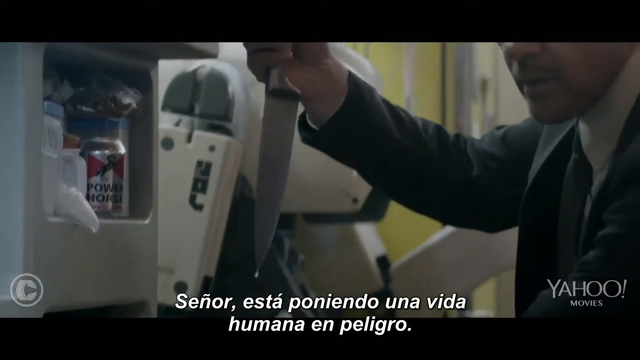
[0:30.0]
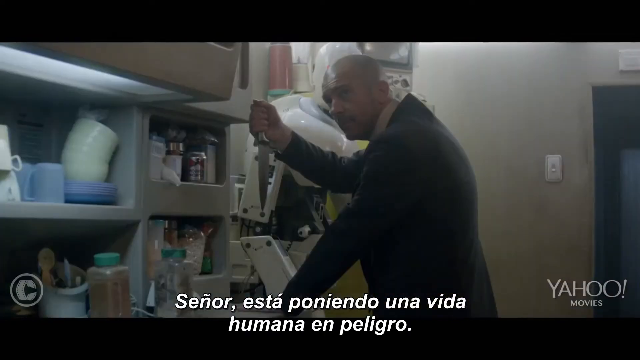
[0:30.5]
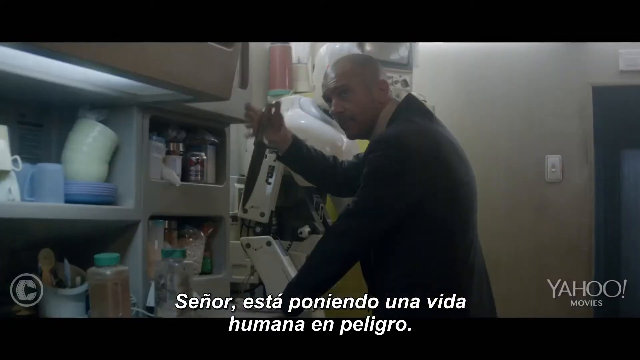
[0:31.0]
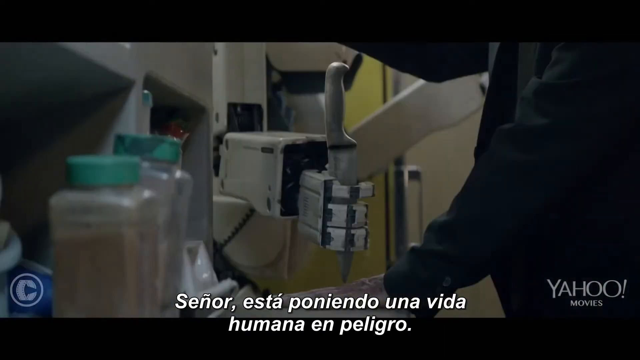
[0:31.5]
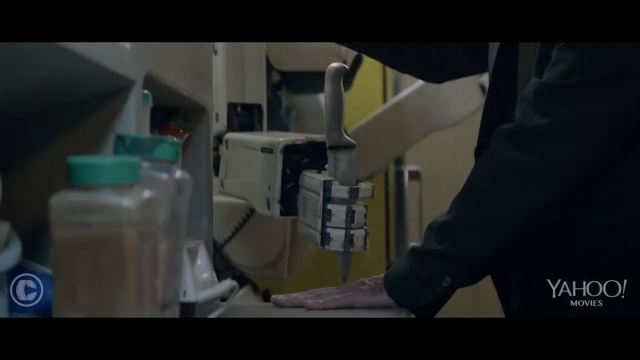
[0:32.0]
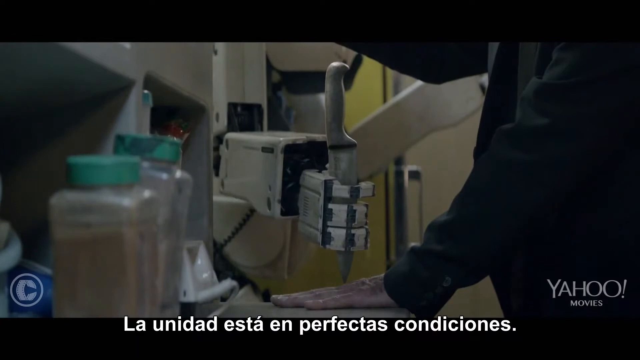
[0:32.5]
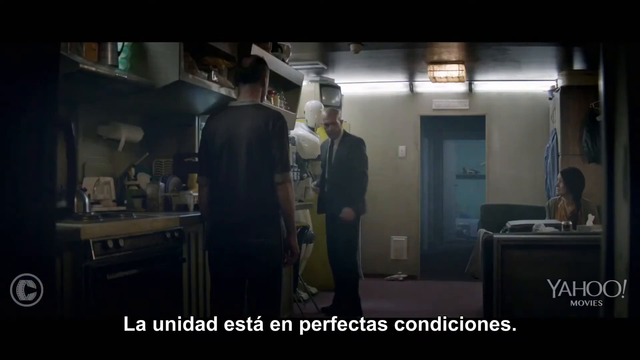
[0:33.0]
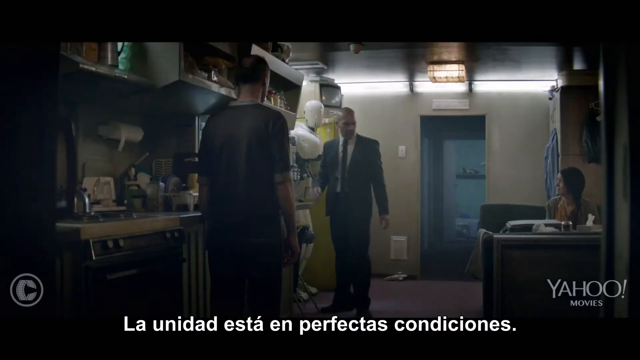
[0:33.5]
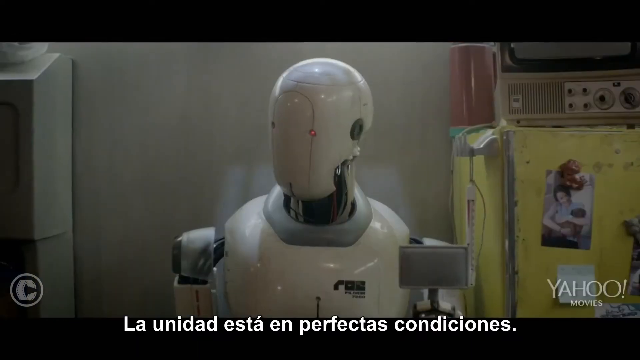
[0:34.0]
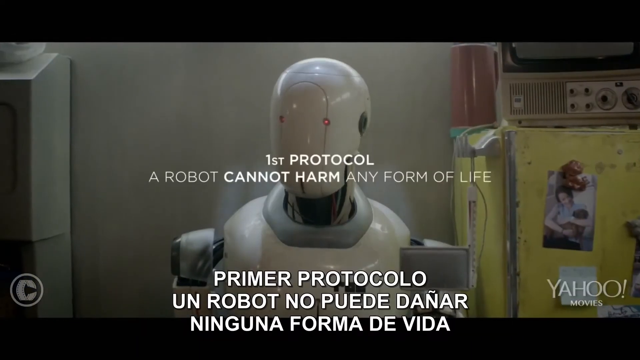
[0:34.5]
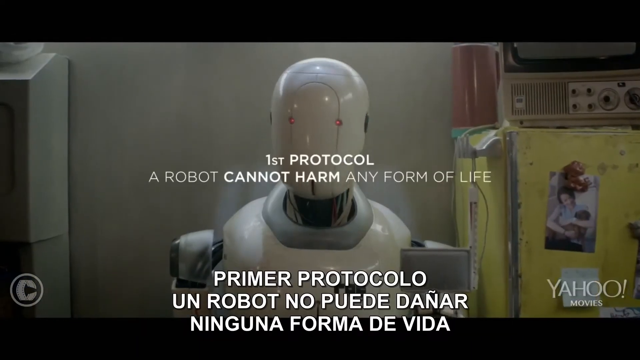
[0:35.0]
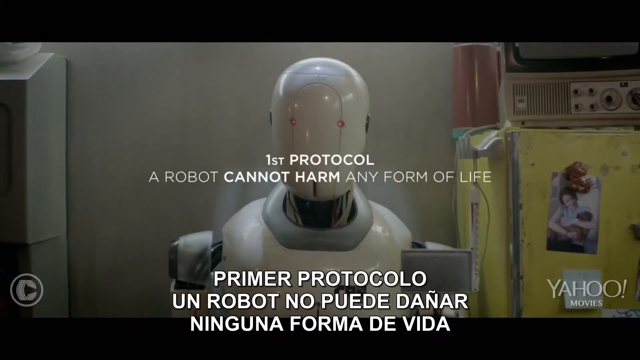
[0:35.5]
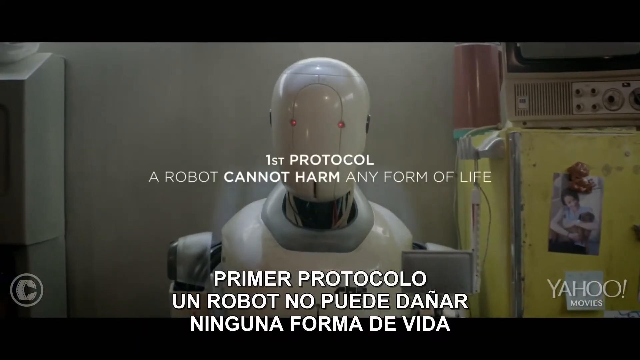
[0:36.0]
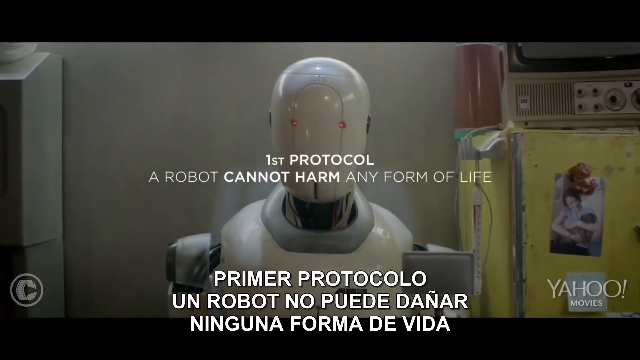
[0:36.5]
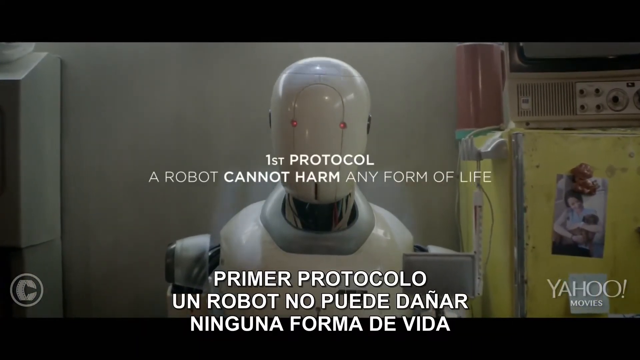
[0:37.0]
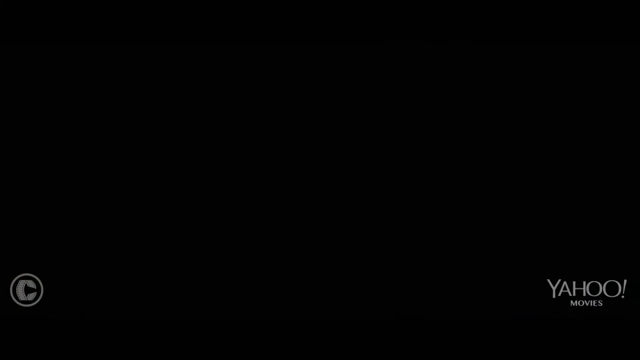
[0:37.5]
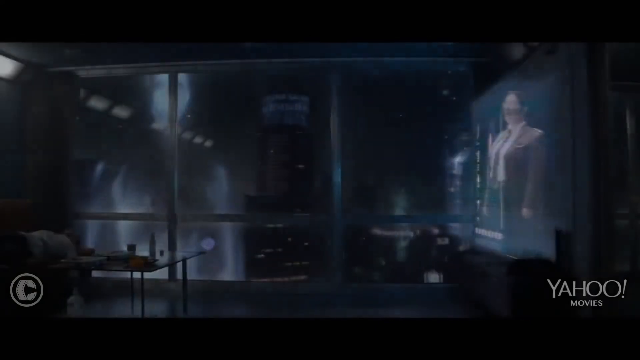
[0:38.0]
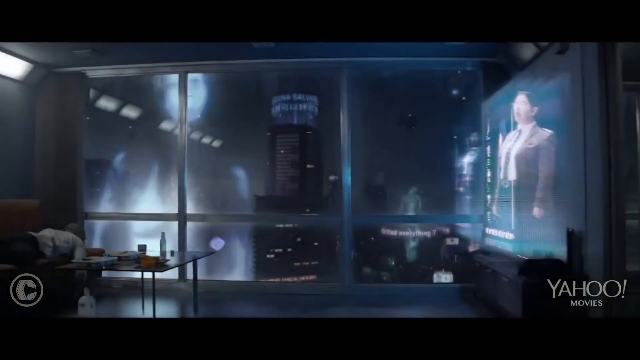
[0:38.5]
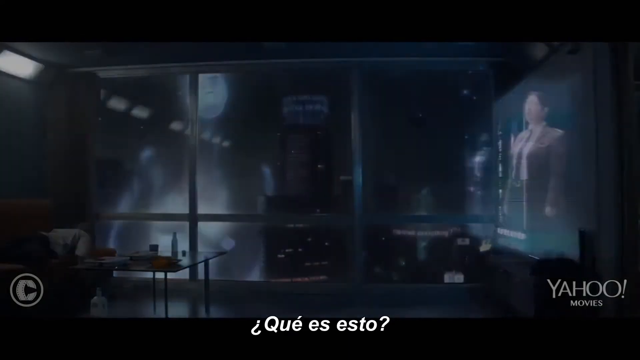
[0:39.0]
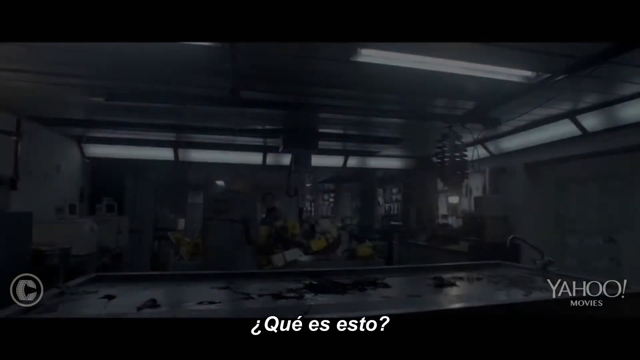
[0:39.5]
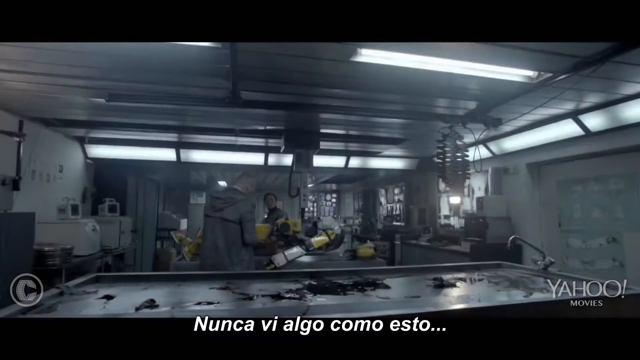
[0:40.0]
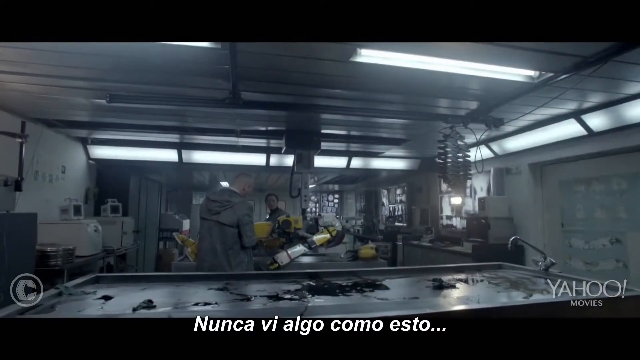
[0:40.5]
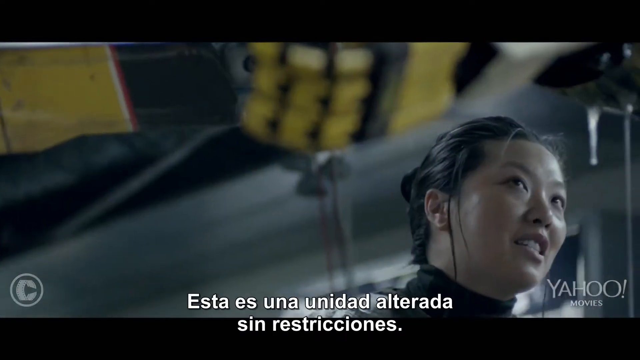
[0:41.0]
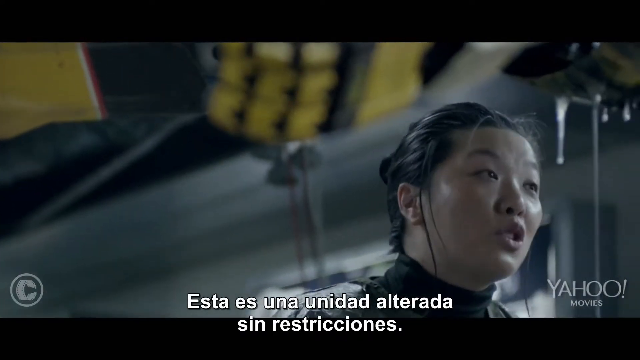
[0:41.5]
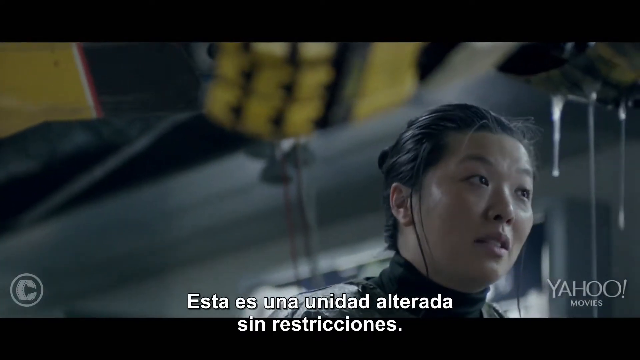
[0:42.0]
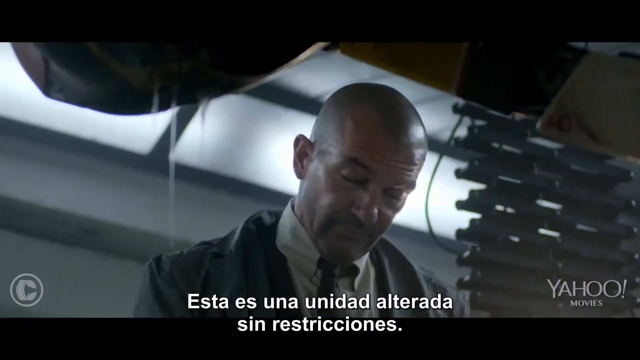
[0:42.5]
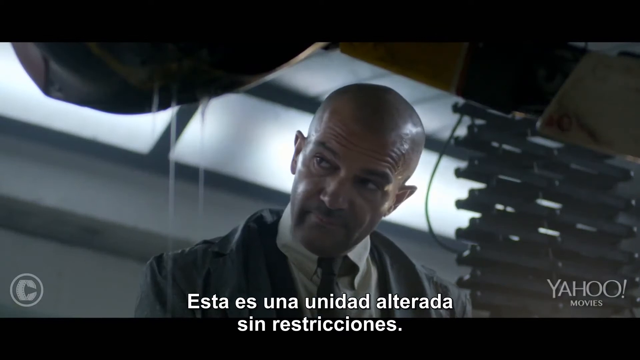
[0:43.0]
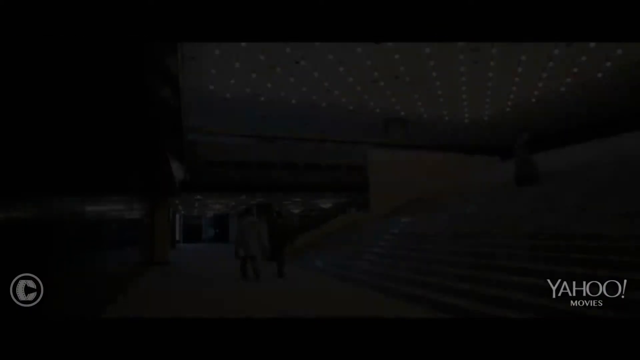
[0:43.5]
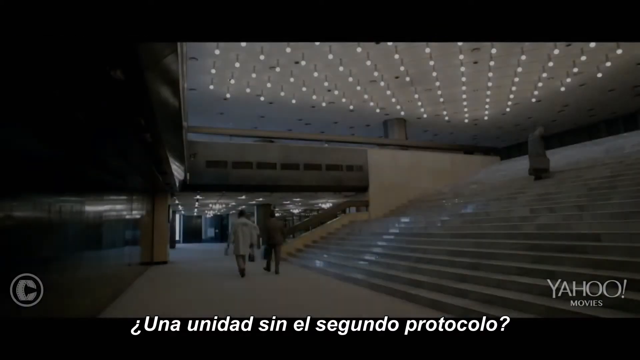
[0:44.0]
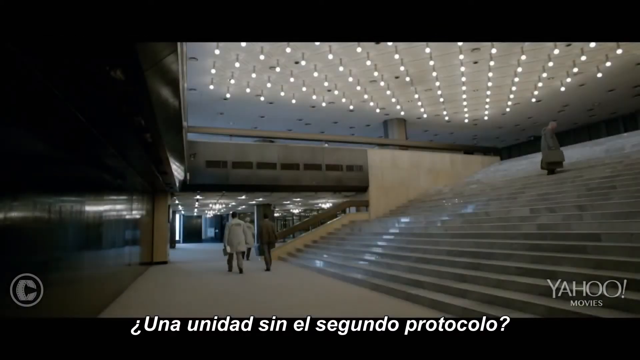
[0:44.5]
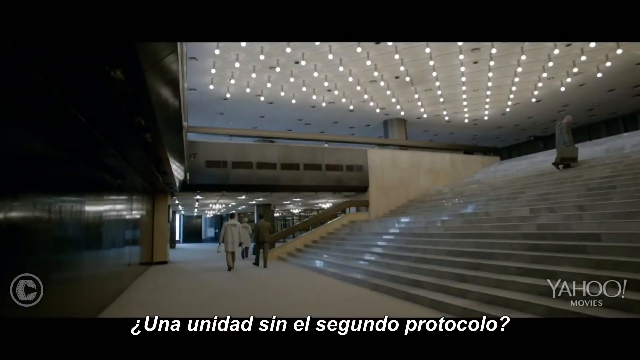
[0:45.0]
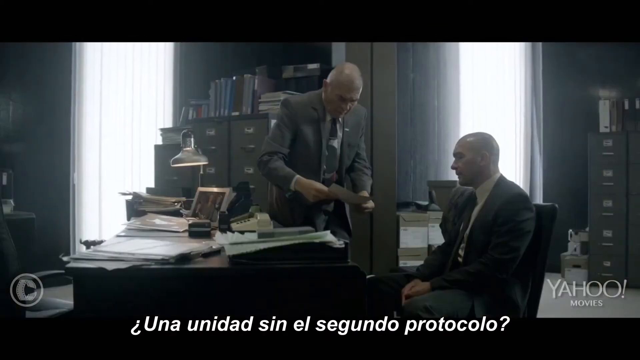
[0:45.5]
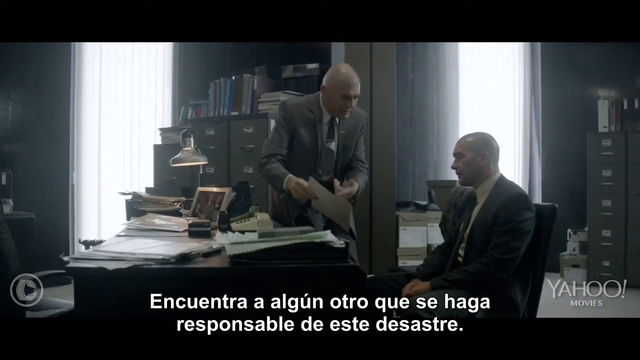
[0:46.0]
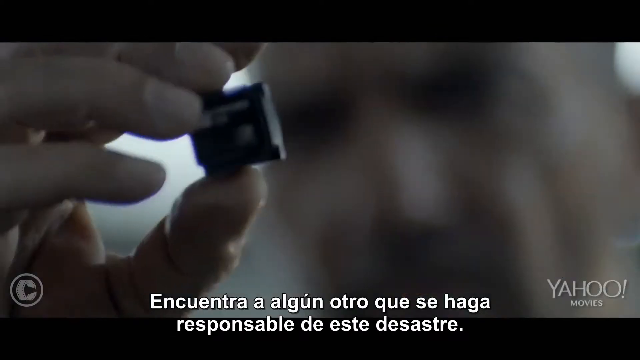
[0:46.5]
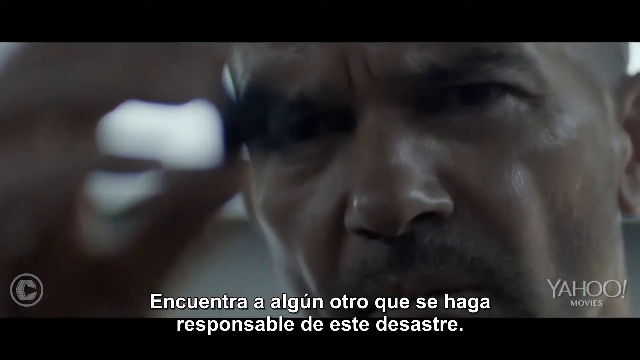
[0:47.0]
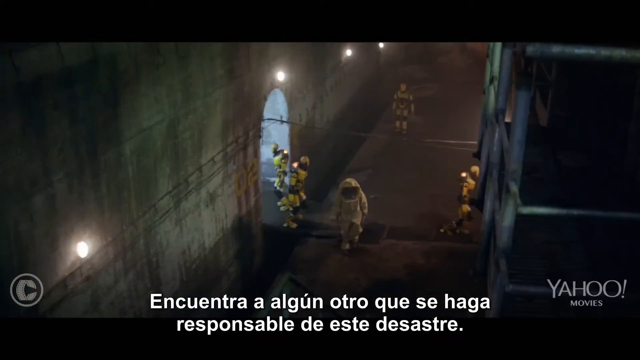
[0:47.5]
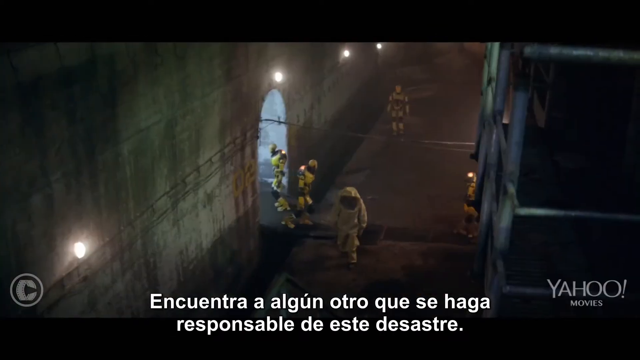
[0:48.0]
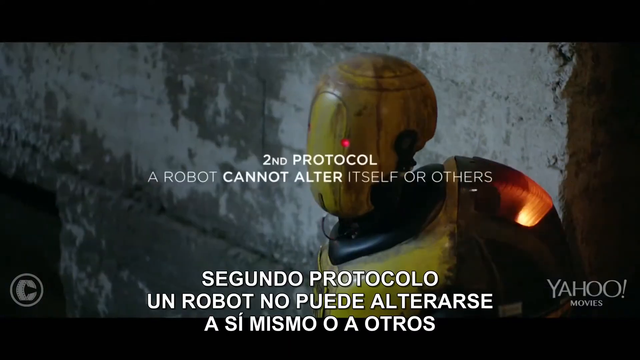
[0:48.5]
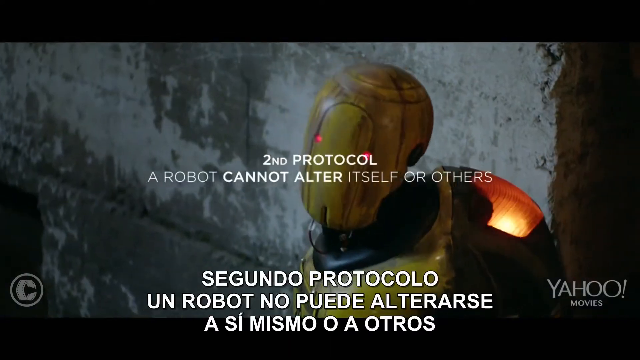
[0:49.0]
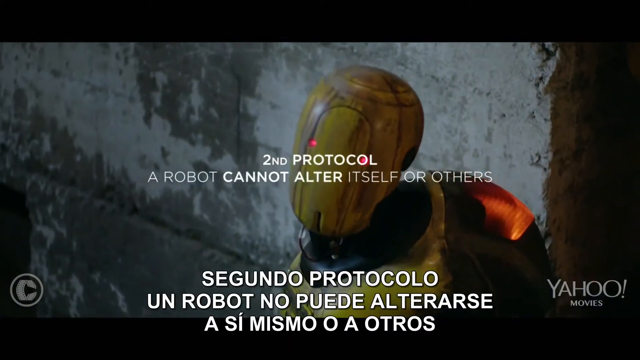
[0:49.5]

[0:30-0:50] A man wields a knife, facing down almost as if looking to stab something below him. He holds his other hand down, so the knife appears aimed at that hand; he attempts to drop it onto his hand, but a robot stops it from happening. The robot is human-like in shape with a full body but robotic features: very small red dot eyes, no mouth or nose, and a chrome white look. A rule for the robots is then shown: "A robot cannot harm any form of life." Another scene shows the robot doing some work, a female character talking, and a bald male protagonist. Then there is another robot, maybe the same one, with coloring that looks a little yellow.